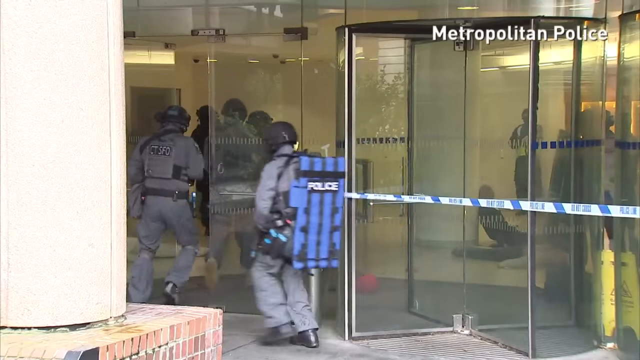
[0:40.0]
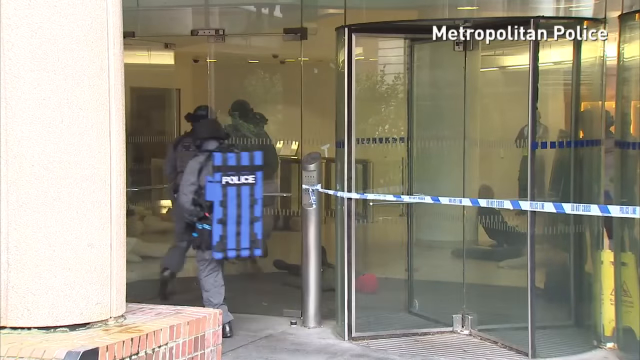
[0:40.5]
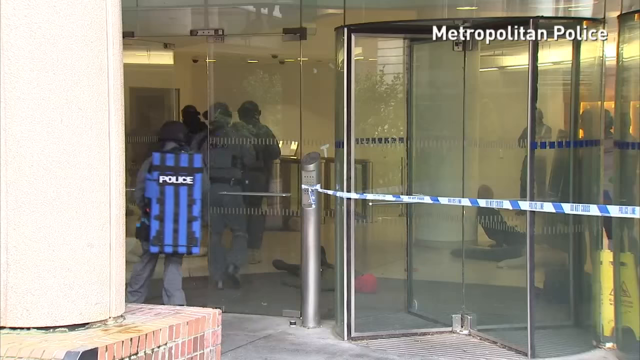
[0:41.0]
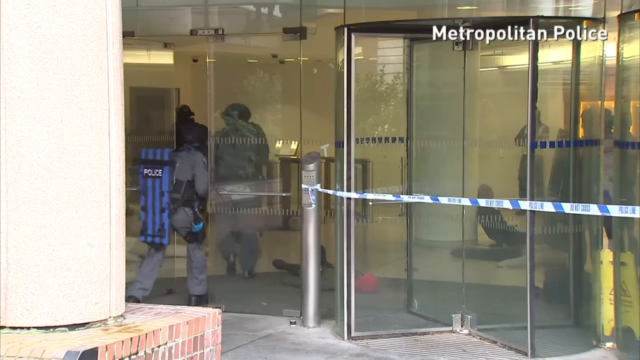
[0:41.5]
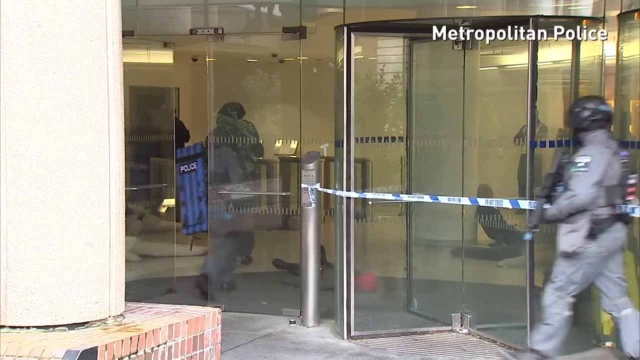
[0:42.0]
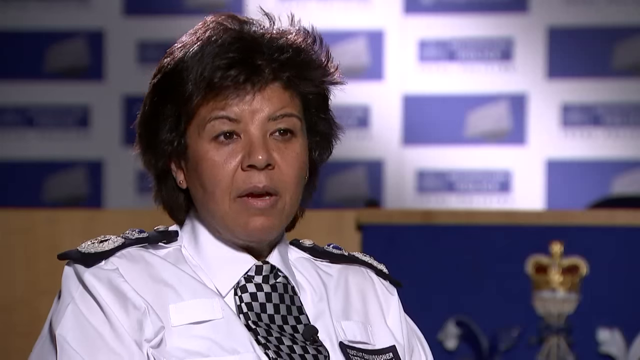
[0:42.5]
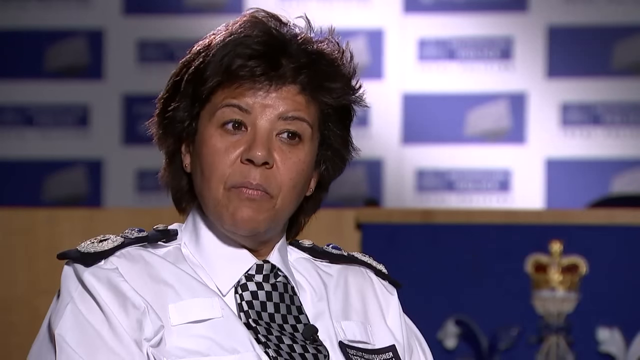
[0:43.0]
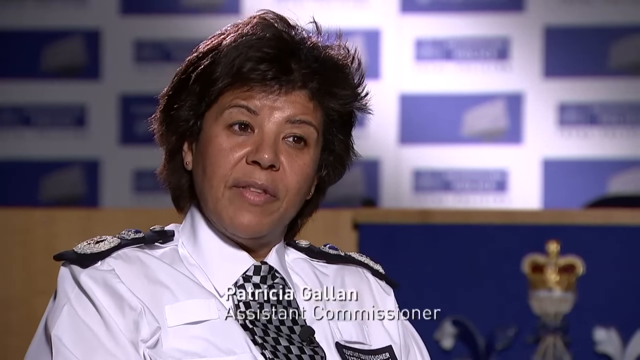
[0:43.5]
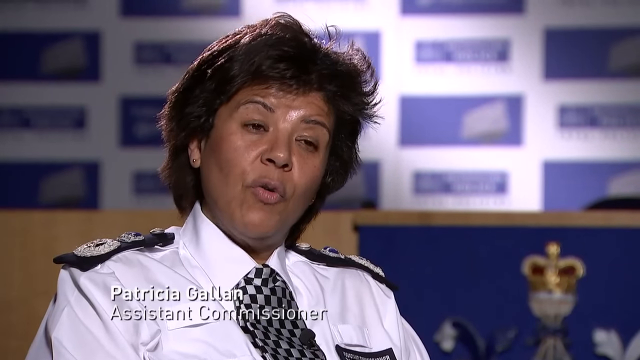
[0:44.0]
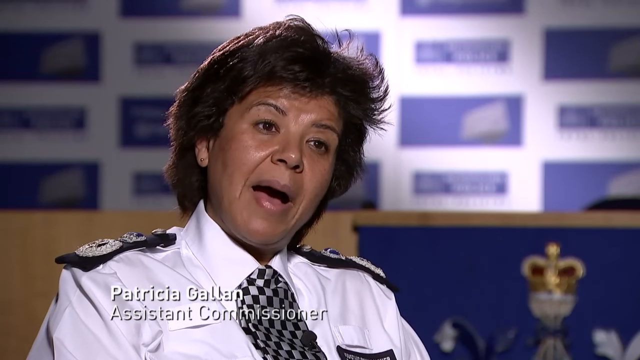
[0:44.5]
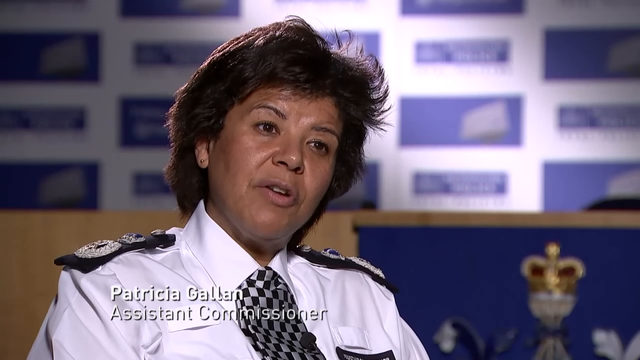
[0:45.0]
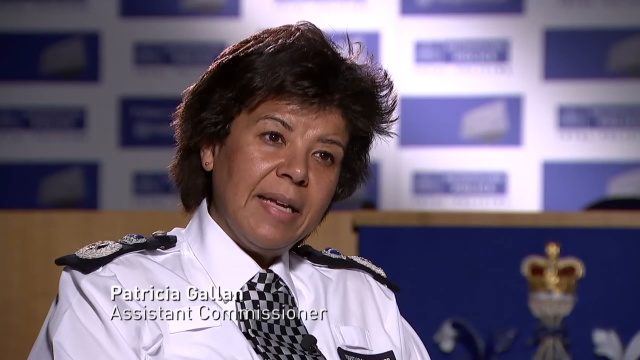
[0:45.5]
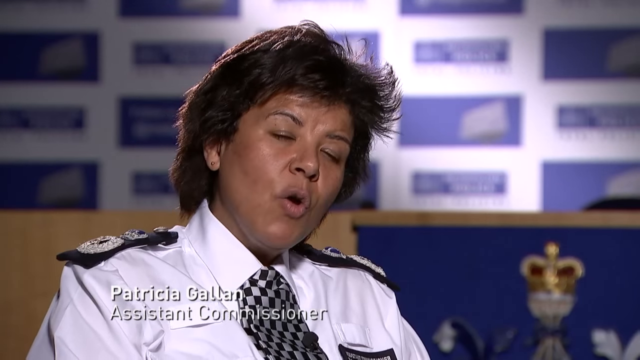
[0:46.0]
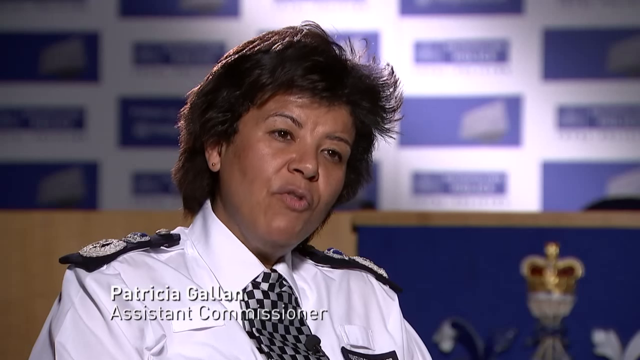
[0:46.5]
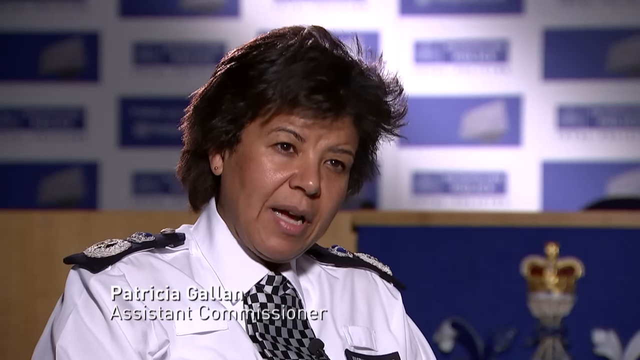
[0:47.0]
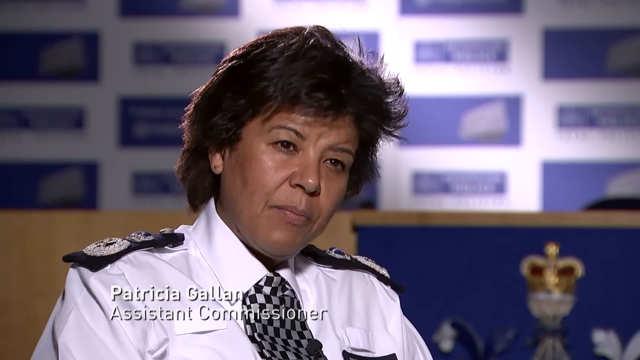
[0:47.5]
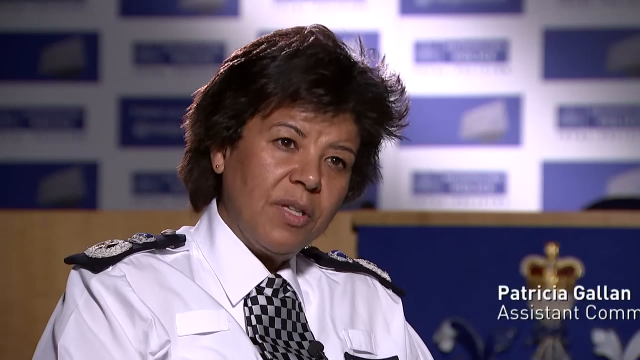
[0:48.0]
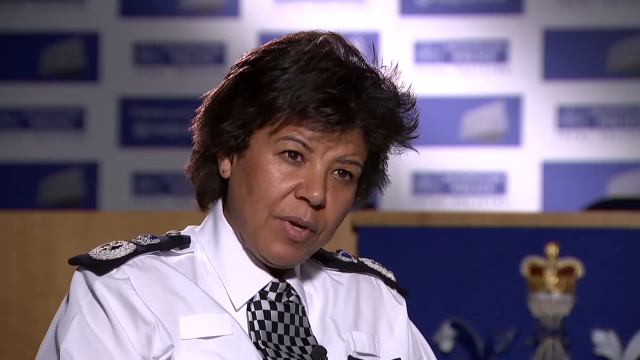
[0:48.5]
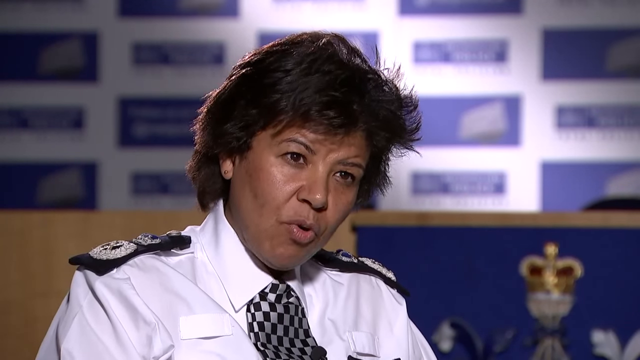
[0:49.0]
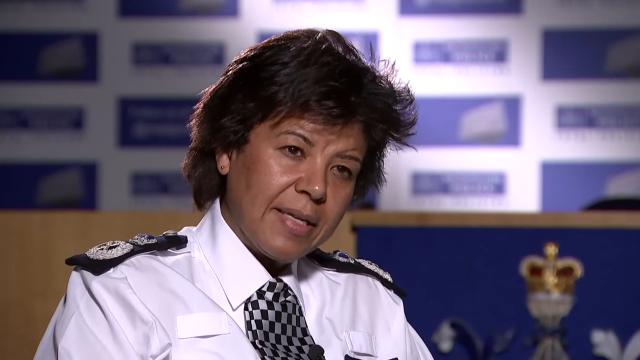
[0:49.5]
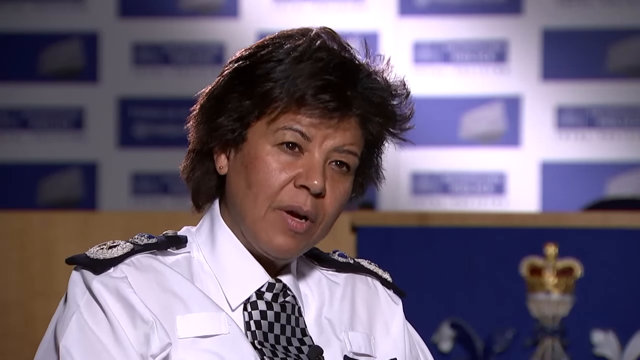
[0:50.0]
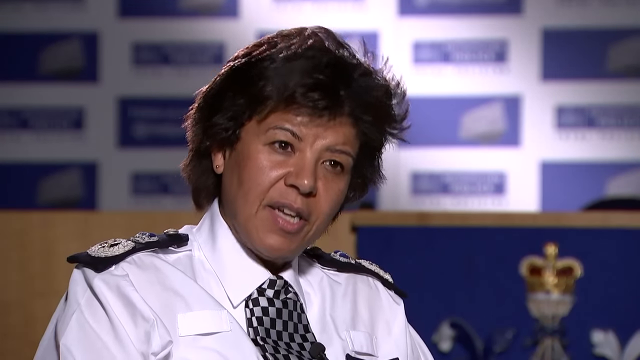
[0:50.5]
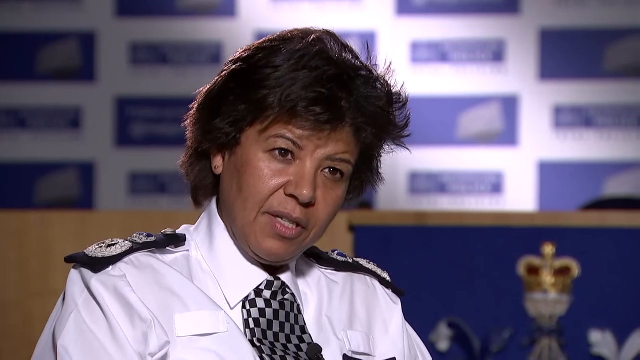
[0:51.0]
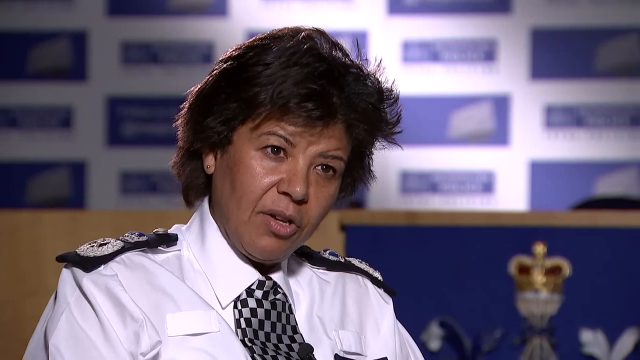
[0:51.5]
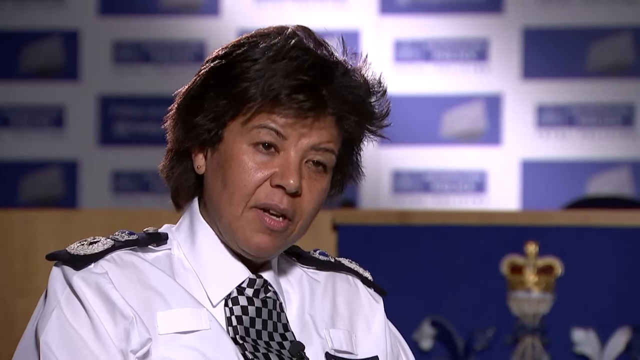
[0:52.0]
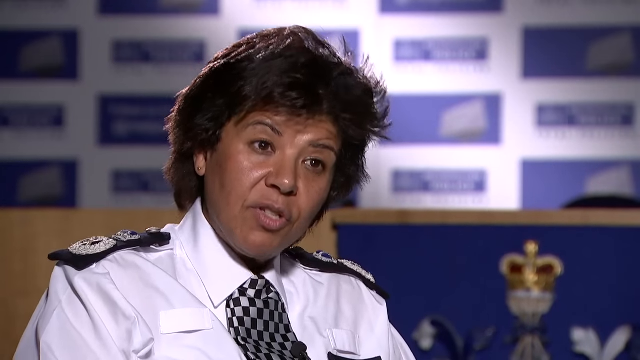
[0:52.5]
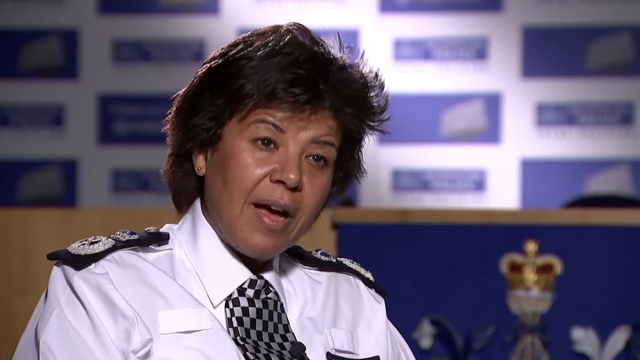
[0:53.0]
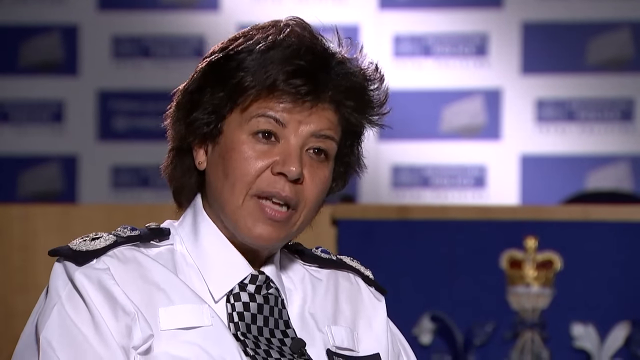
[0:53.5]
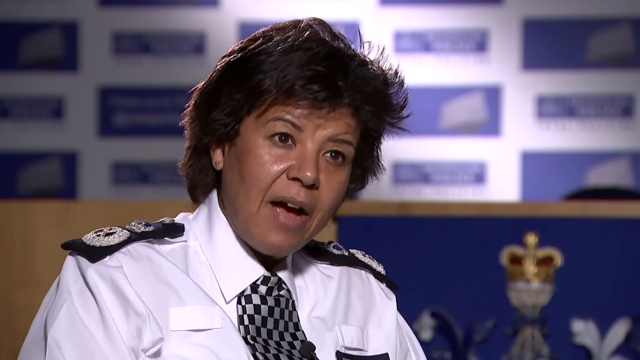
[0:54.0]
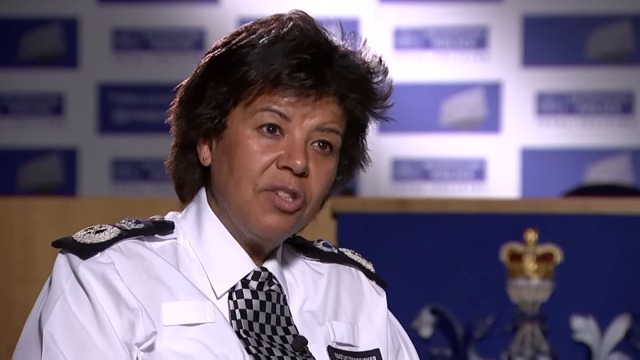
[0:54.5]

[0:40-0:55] What appears to be an interview shows a woman police officer, with text reading "Patricia Gallen, assistant commissioner." She wears a white uniform with a black and gray checkered tie and has a serious face, apparently explaining the police training.